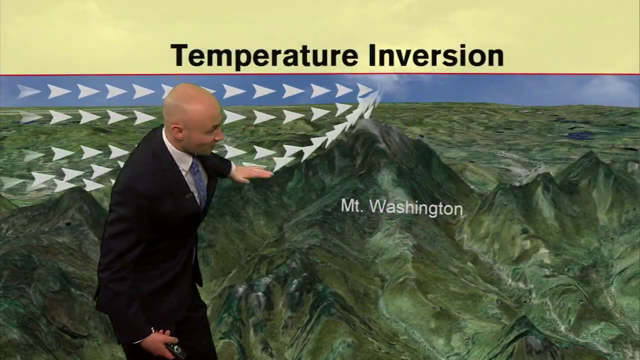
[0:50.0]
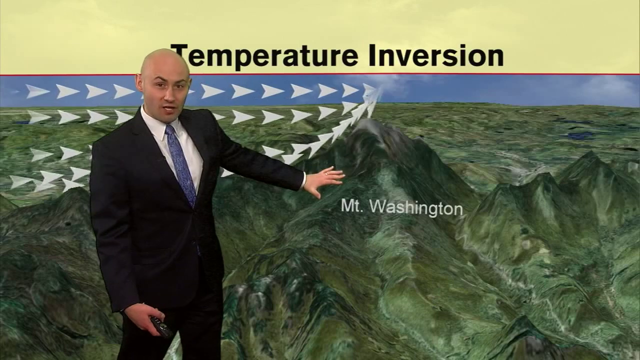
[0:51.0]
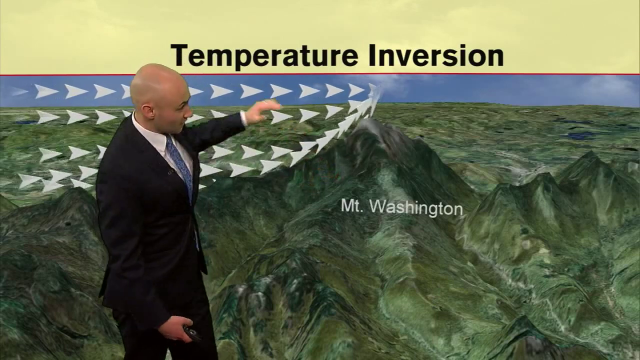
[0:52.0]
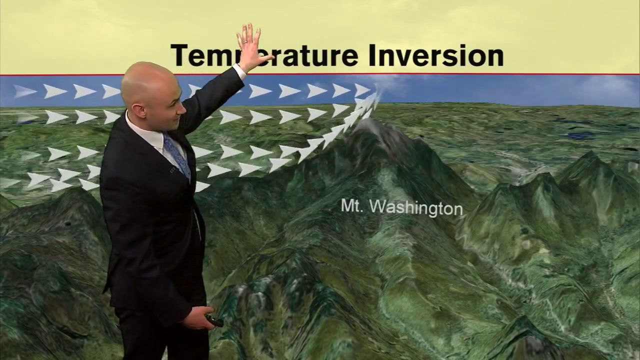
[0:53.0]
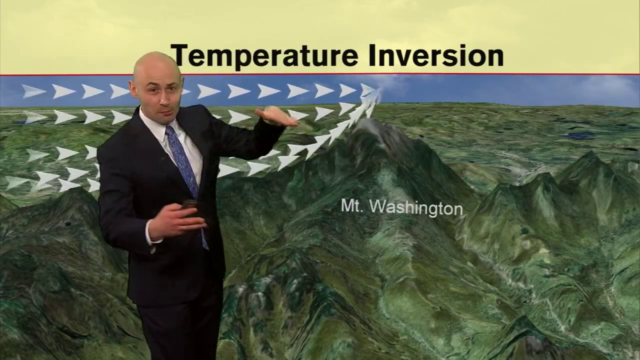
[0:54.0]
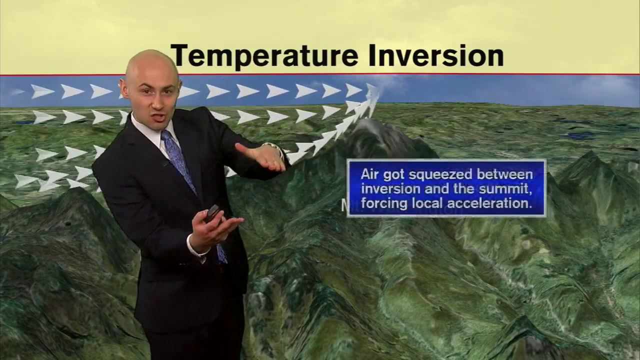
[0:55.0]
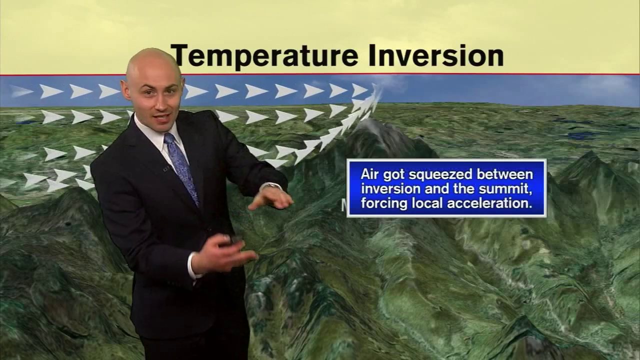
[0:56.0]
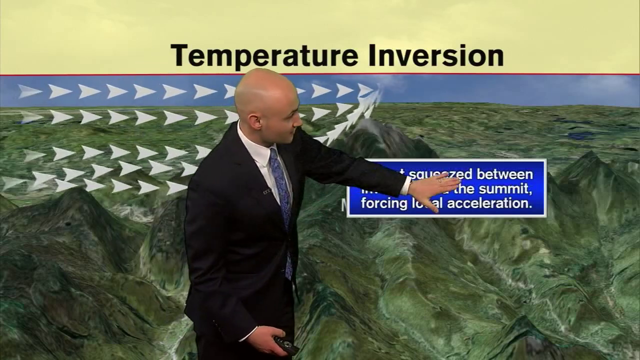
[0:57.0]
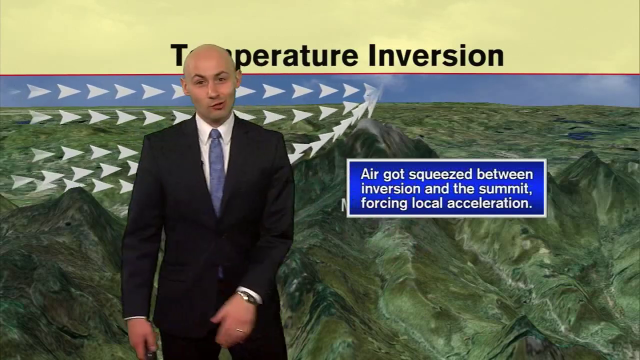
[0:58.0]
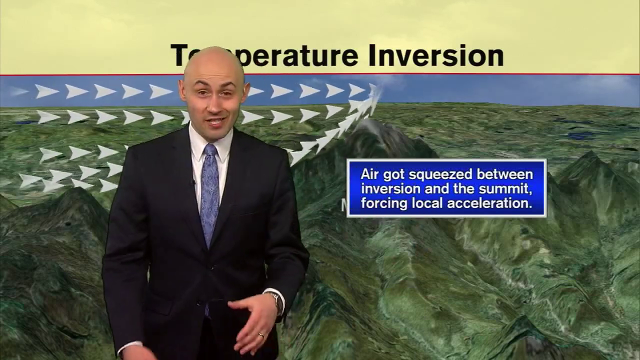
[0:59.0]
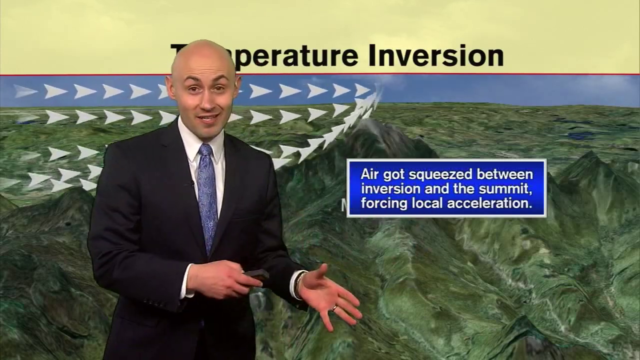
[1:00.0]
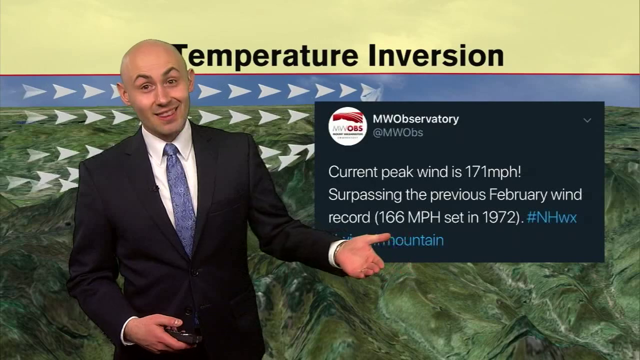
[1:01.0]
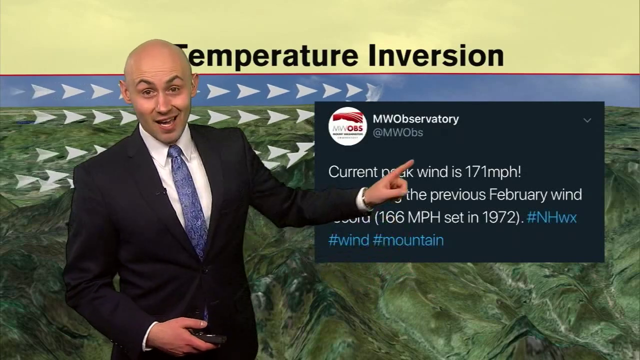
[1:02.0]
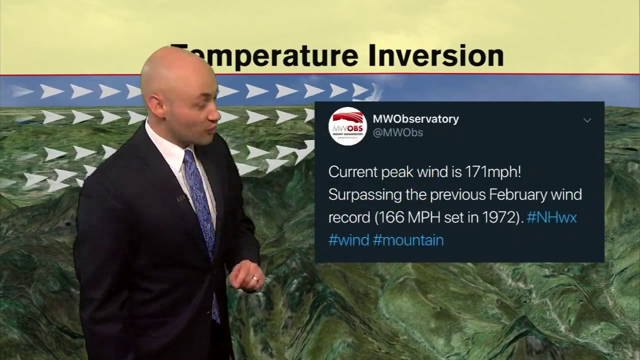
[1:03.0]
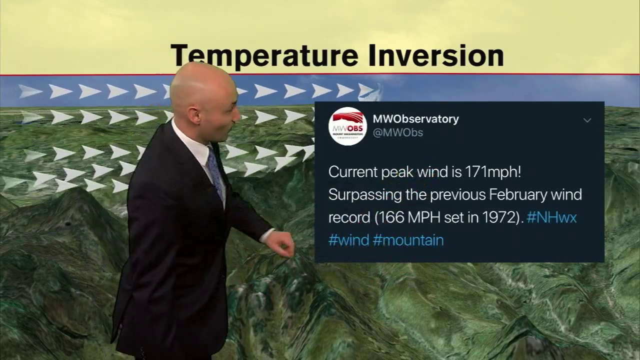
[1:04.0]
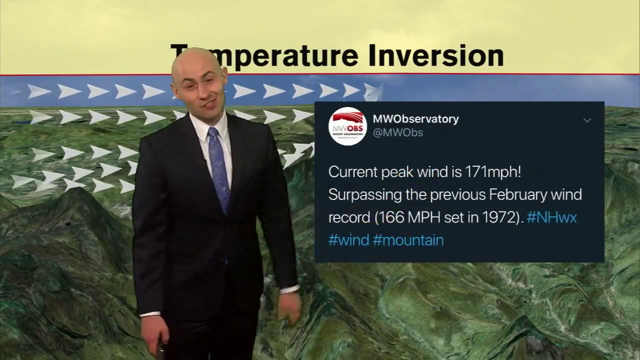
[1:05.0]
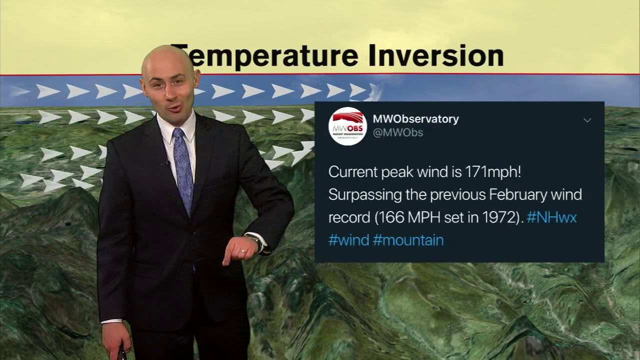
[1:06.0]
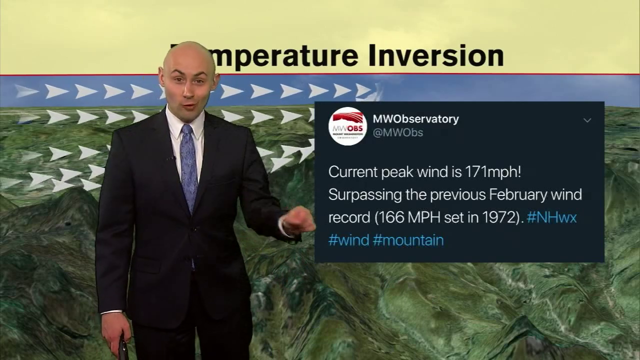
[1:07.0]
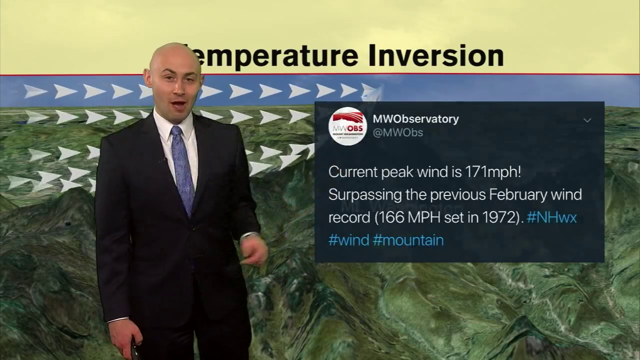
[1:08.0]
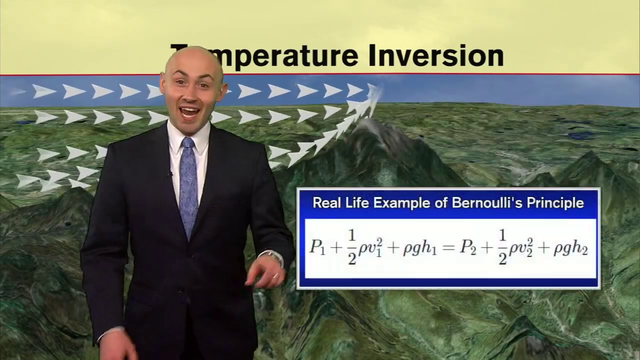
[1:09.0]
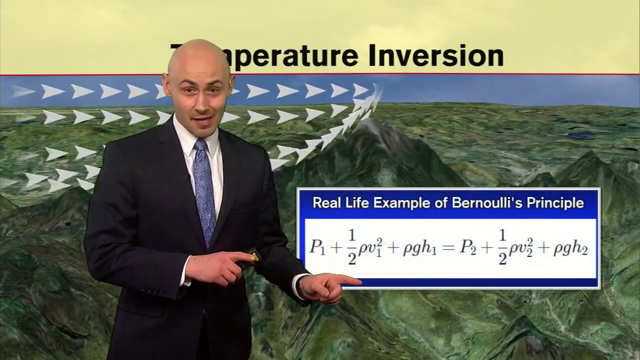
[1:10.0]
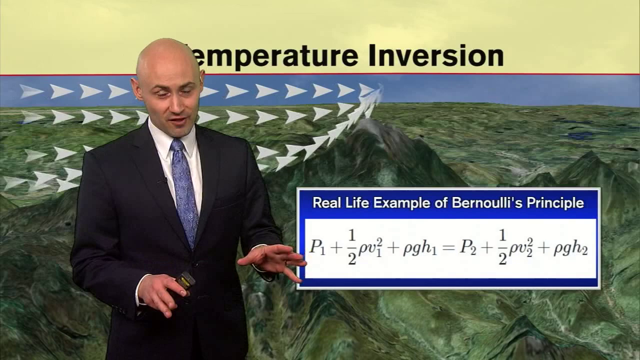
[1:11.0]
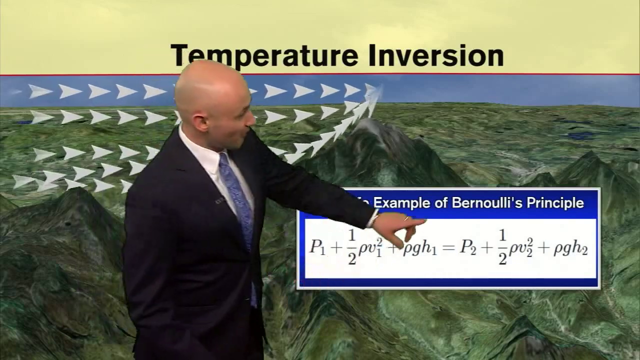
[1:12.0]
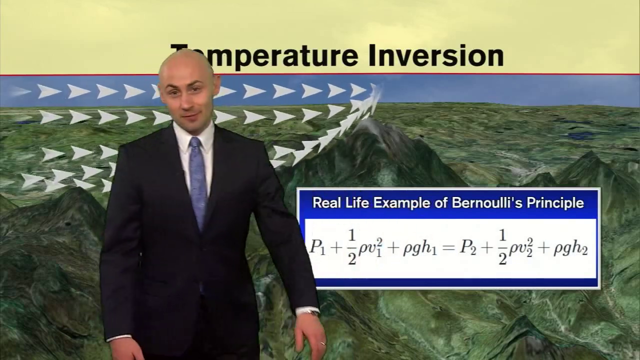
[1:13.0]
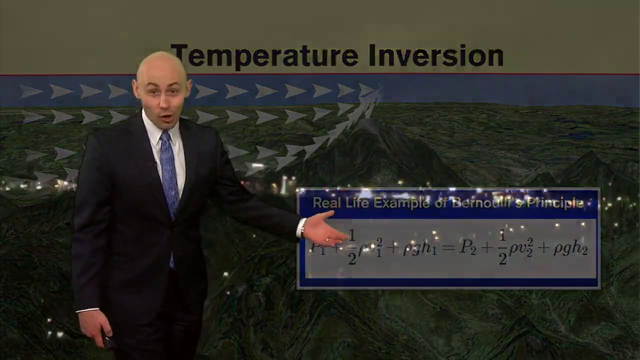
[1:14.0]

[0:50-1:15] A bald male weather reporter stands in front of a 3D image of what is possibly Mount Washington, with short white arrows flowing on top of it, probably illustrating the impact of a weather event on the mountain. The text "Temperature Inversion" is written in black on a yellow background at the top of the screen. The man wears a dark jacket, a light blue tie and a white shirt, and holds a black electronic device in his right hand. The text "Air got squeezed between inversion and the summit, forcing local acceleration" then appears in white on a blue background with a white outline, around the right side of the screen. The man points at the text and then turns around, apparently to talk about it. A social media post from an account belonging to 'MWObservatory' then appears on a dark navy blue background, starting with the text "Current peak wind is 171mph!" The man turns around, appearing to touch it, and then turns around again to face the camera. A mathematical equation then appears in place of the earlier graphic, with the text "Real Life Example of Bernoulli's Principle" on top of it. The man points at it again before the video briefly shows a side aerial view of a city at night with lights glowing in the dark.